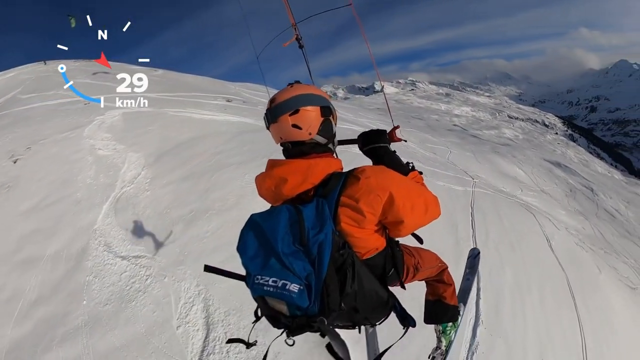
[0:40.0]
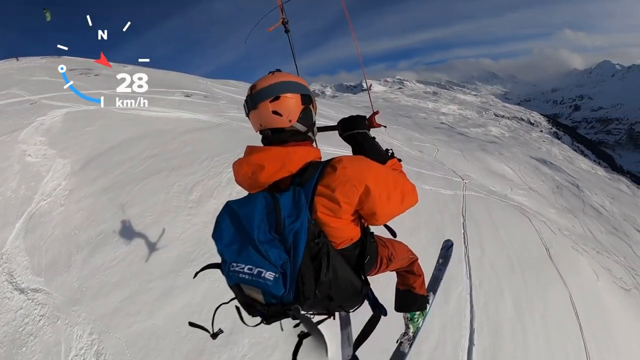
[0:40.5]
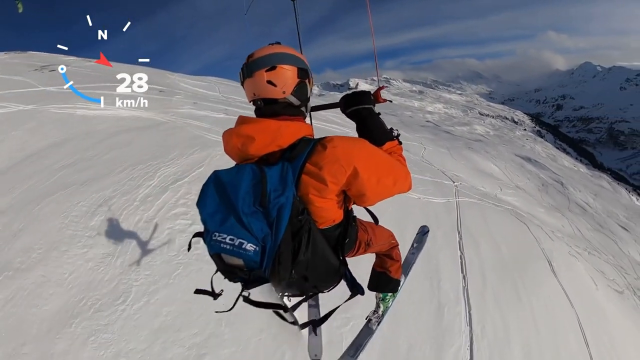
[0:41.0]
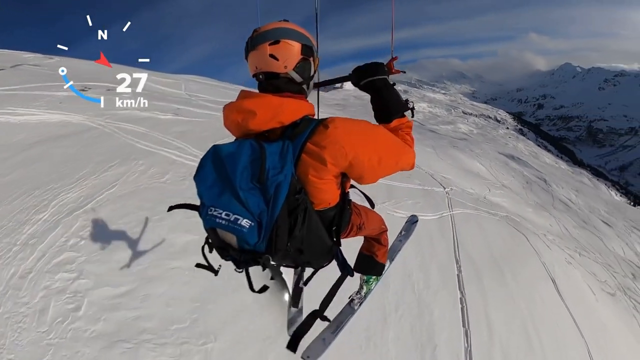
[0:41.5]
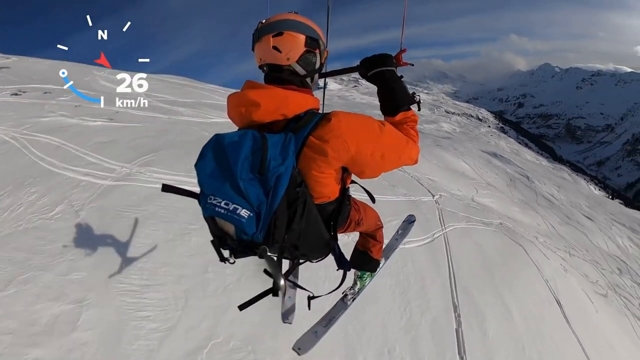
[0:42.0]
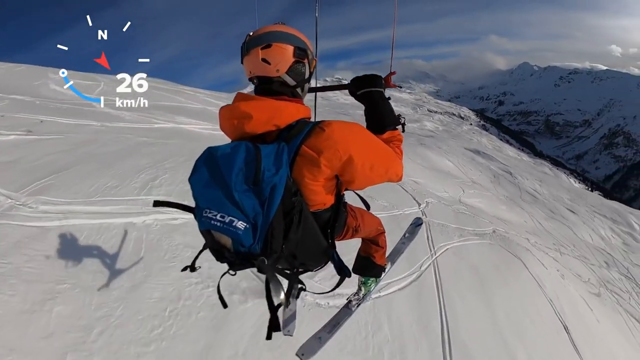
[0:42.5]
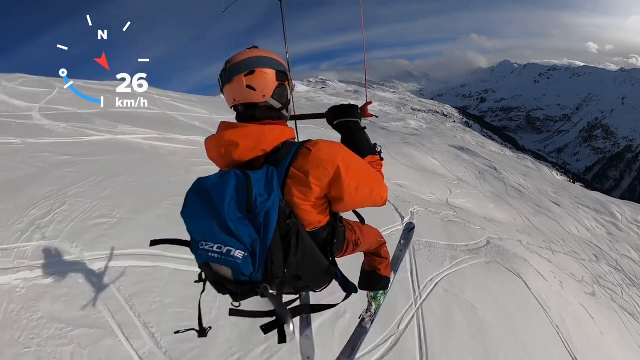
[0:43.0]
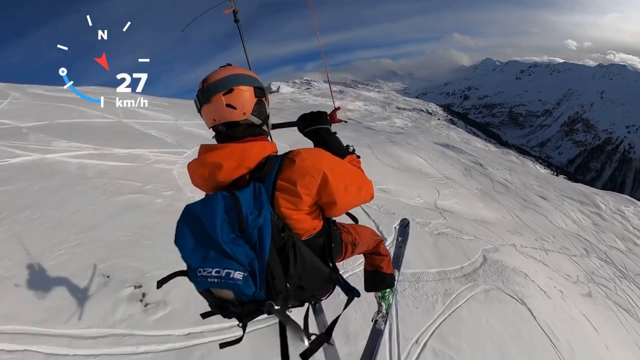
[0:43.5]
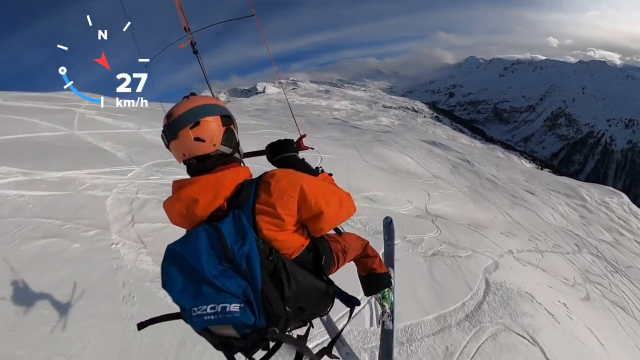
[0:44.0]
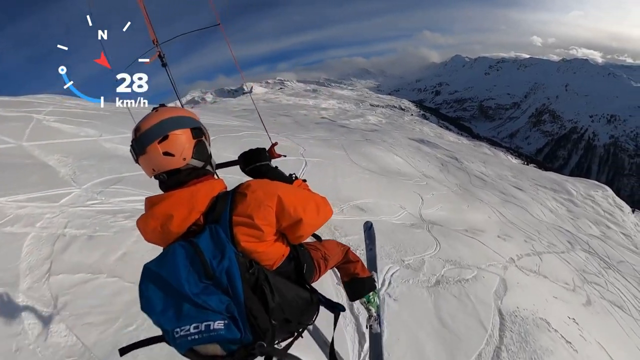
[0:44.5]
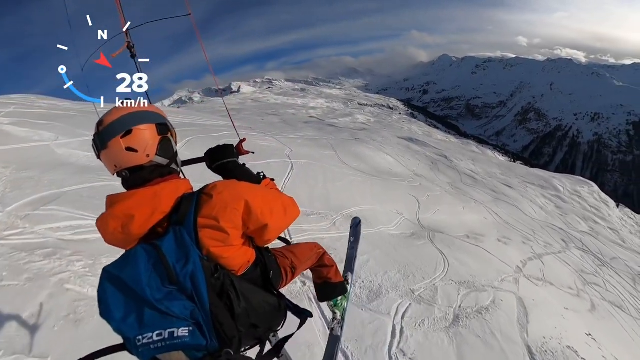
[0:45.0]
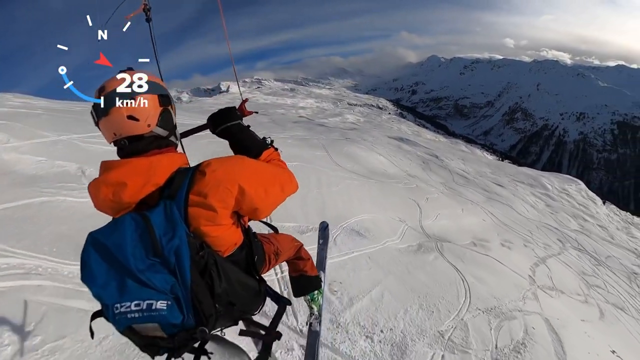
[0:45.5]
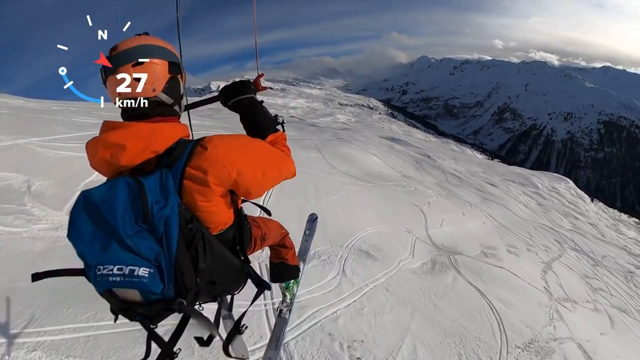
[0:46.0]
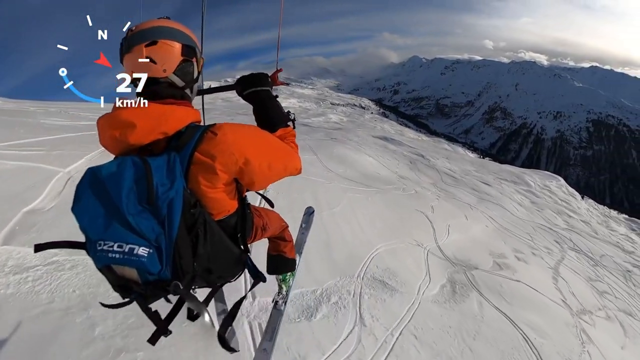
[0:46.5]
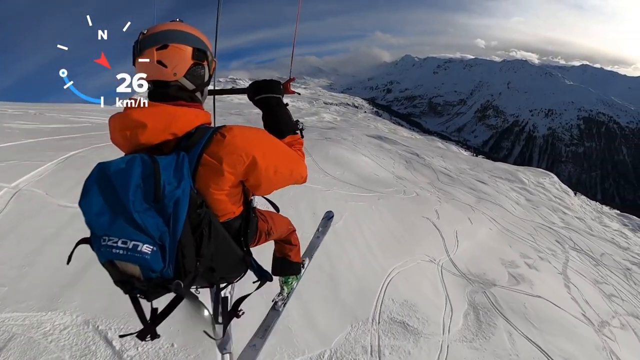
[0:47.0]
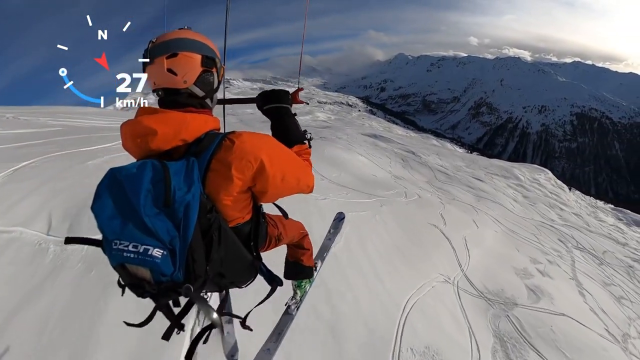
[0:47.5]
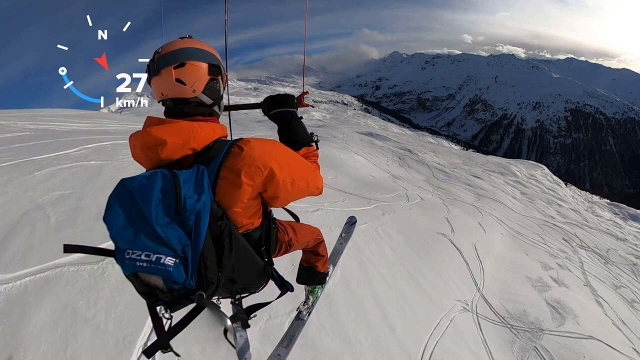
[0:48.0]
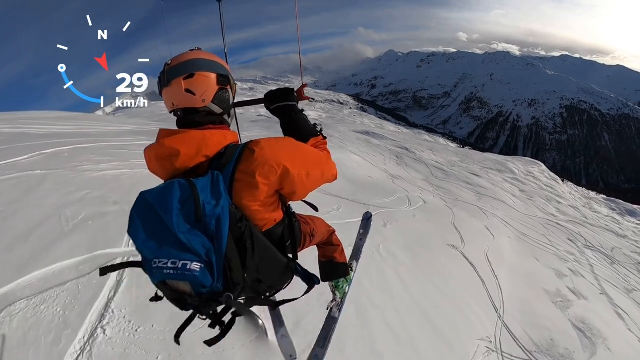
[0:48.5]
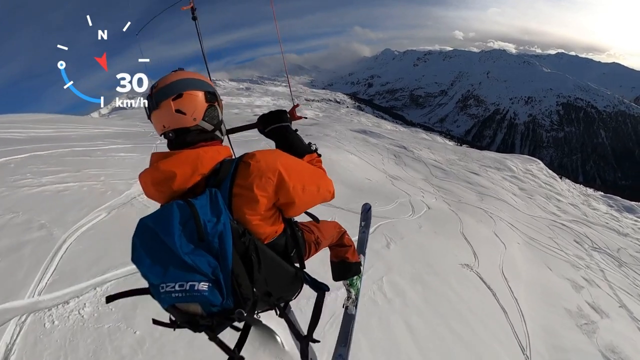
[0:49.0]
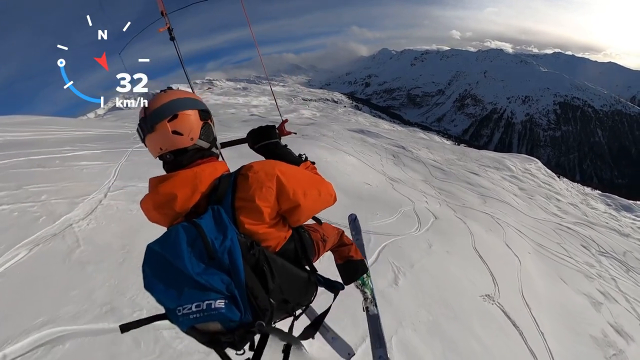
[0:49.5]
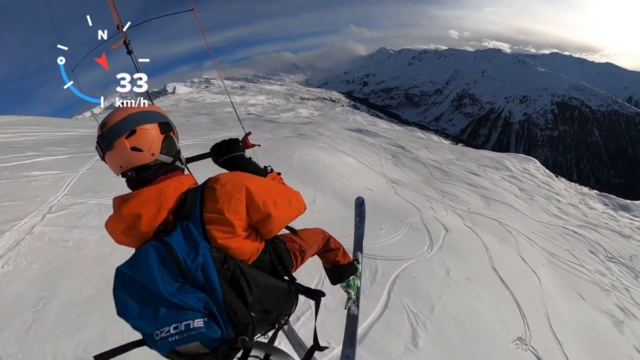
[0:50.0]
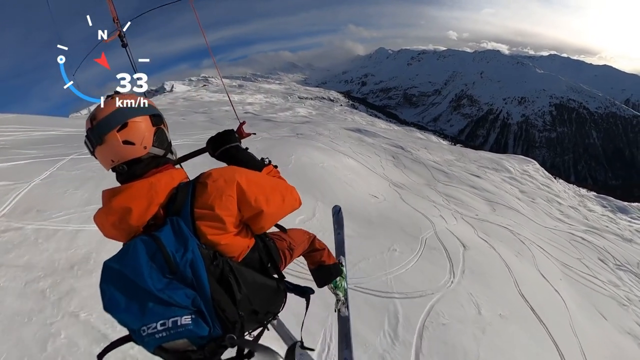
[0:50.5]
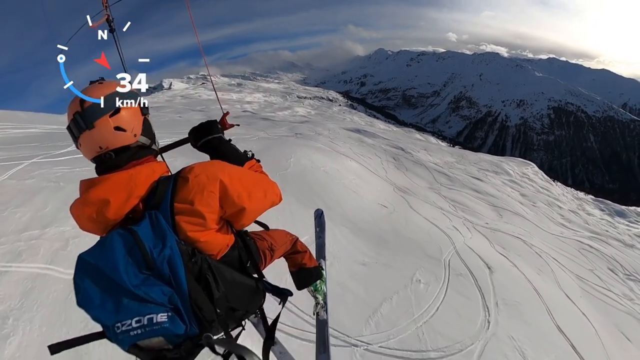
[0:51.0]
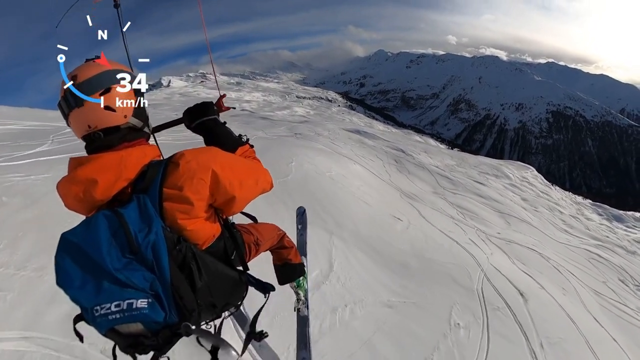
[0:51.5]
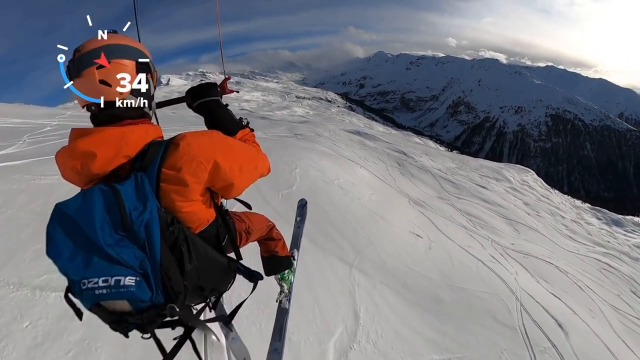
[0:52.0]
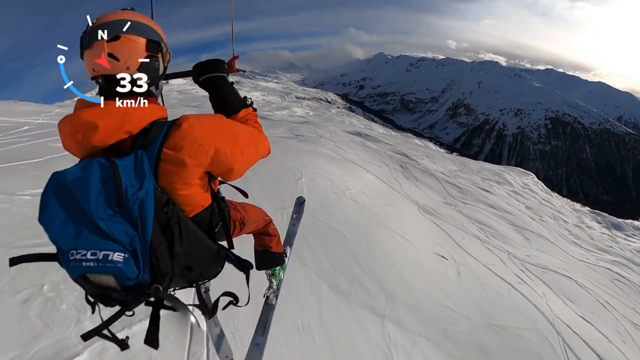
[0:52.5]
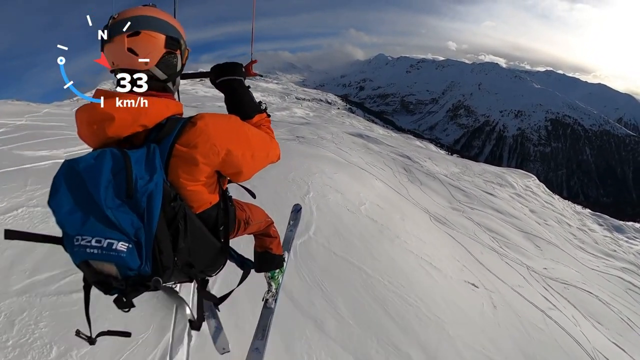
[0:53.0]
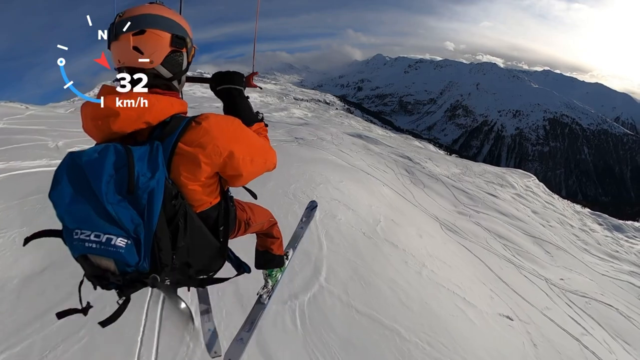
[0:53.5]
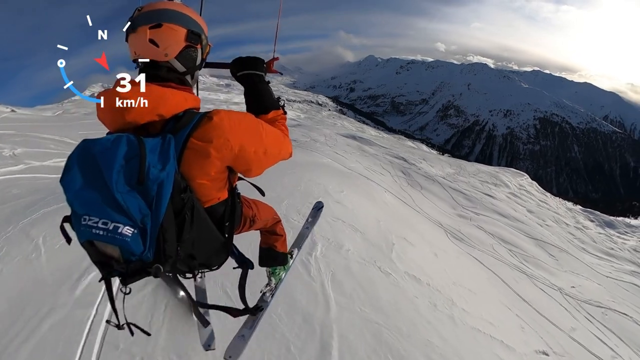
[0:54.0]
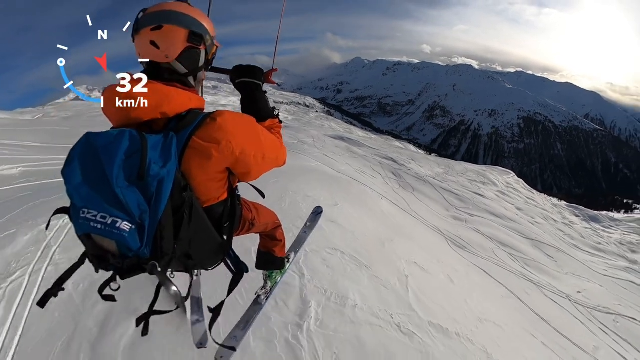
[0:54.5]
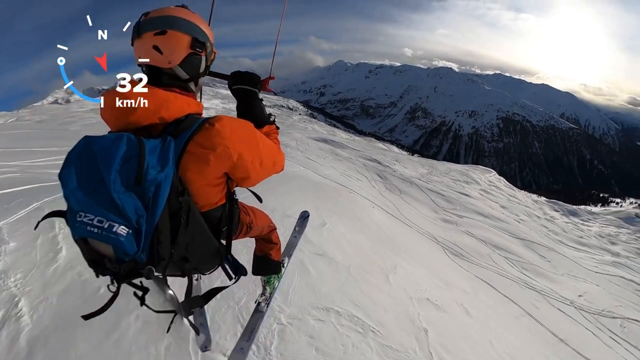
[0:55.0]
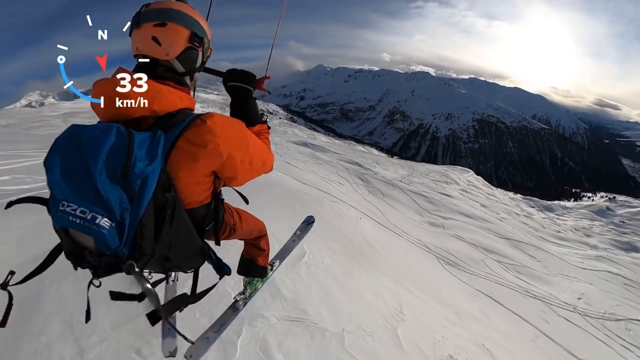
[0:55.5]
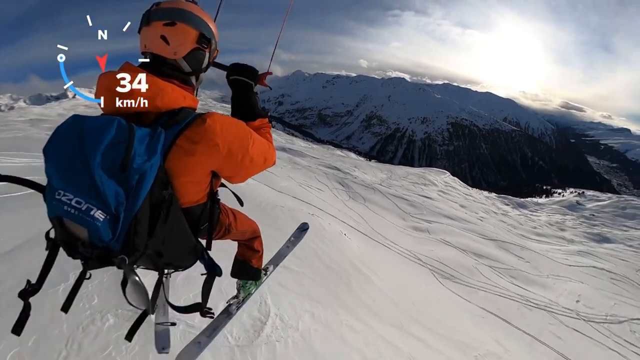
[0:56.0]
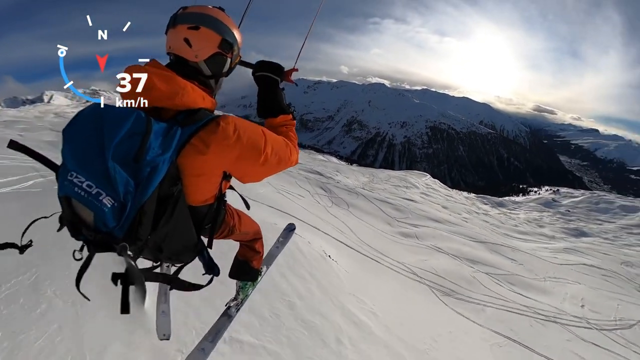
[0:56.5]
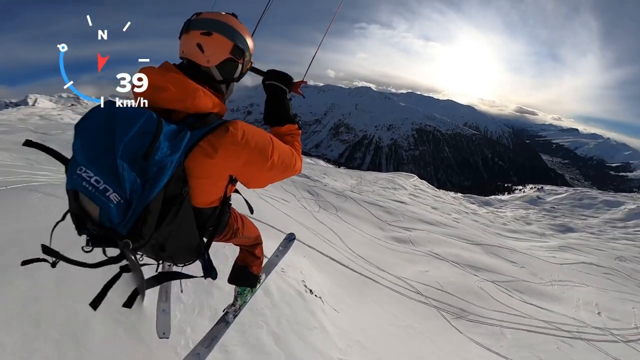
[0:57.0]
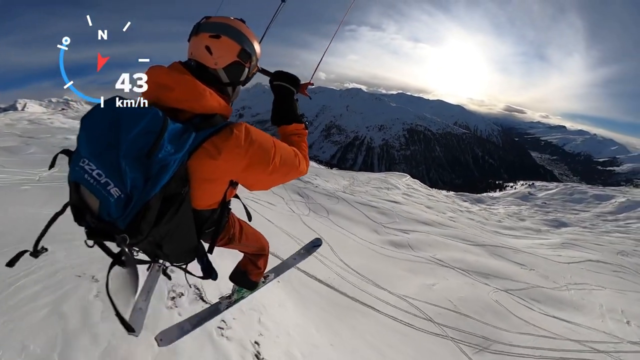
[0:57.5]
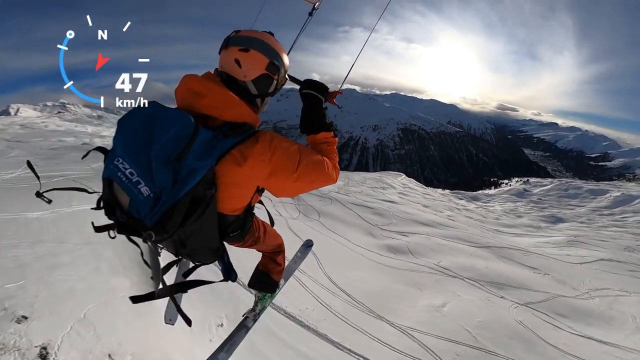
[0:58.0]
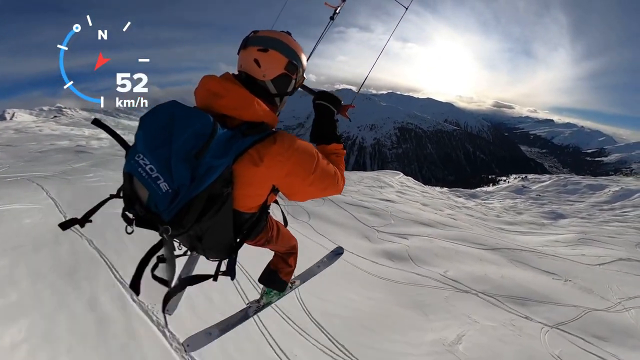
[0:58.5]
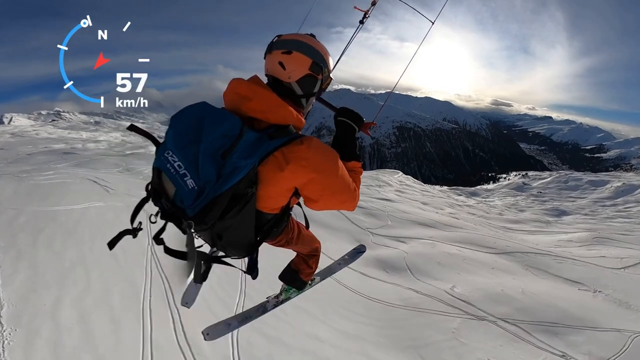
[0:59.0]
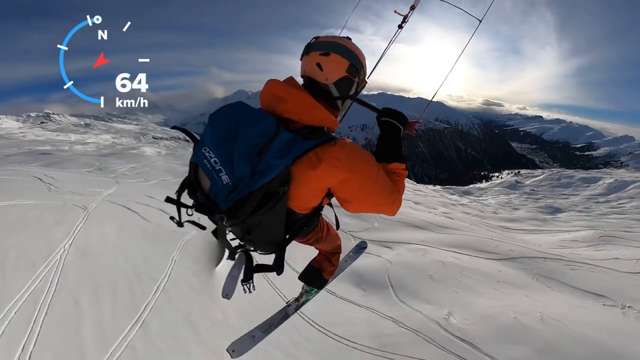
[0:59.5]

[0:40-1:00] The man glides slowly down the hill, getting faster and faster as the speed changes on the left-hand side; starting at a slower speed, it almost doubles by the end. It looks like the wind pulls him off to the left at first, and then he moves to the right, where the reading climbs to 72 kilometers per hour. His face is never shown; he wears the orange helmet, an orange top, orange pants and the blue backpack with multiple straps. There is nobody else in the video. Everywhere there are mountains, snow and sky, with some clouds in the sky.